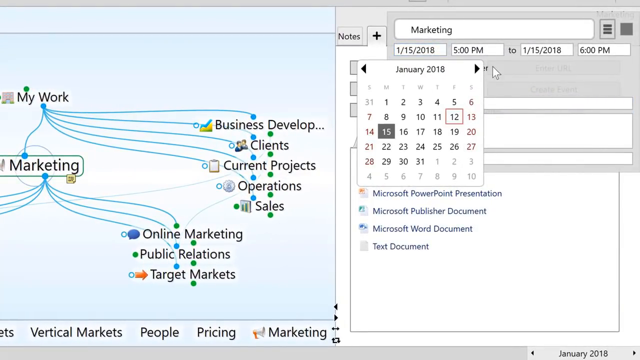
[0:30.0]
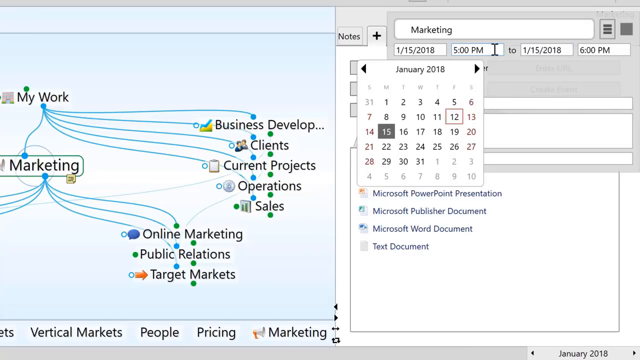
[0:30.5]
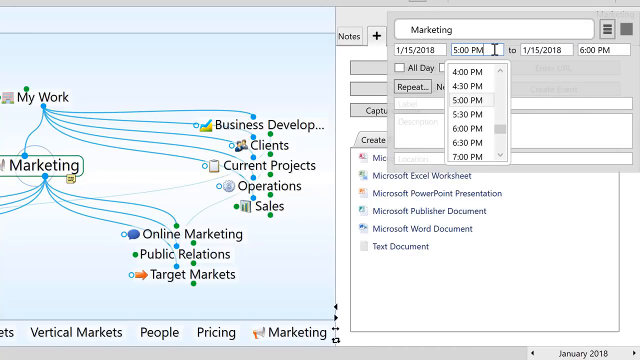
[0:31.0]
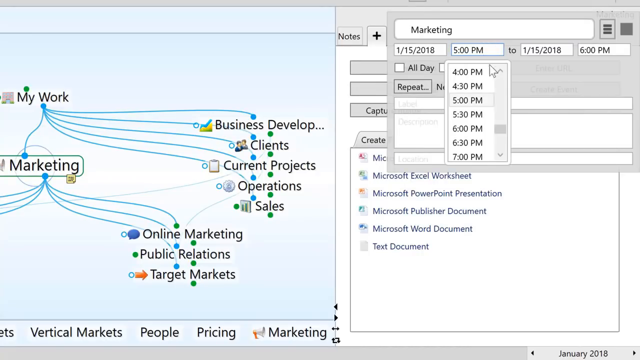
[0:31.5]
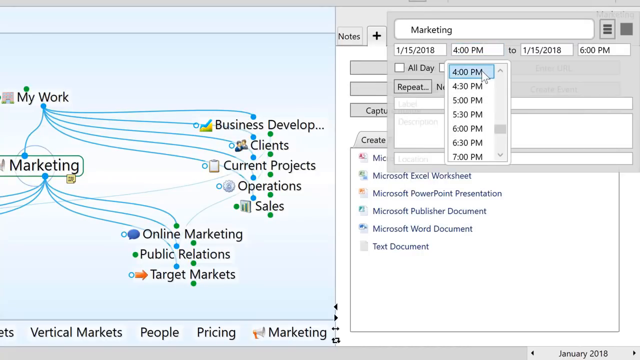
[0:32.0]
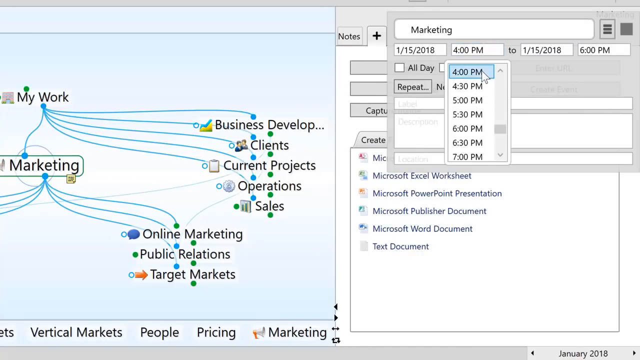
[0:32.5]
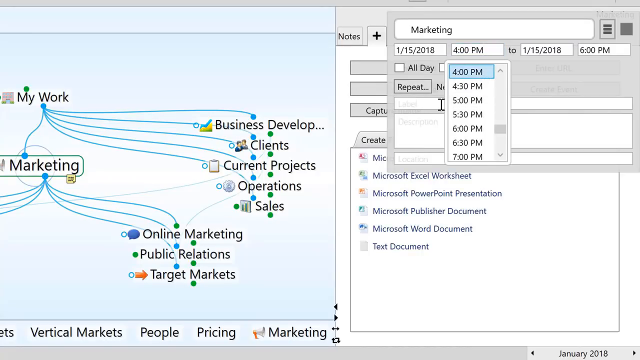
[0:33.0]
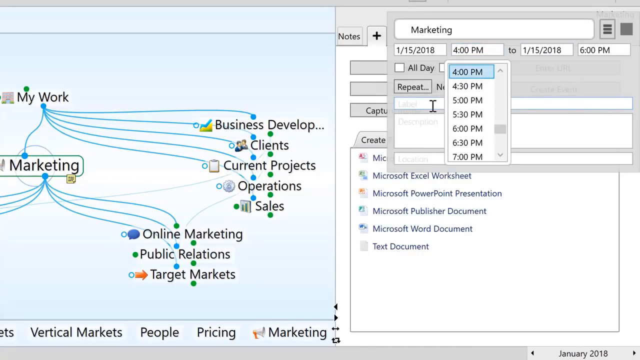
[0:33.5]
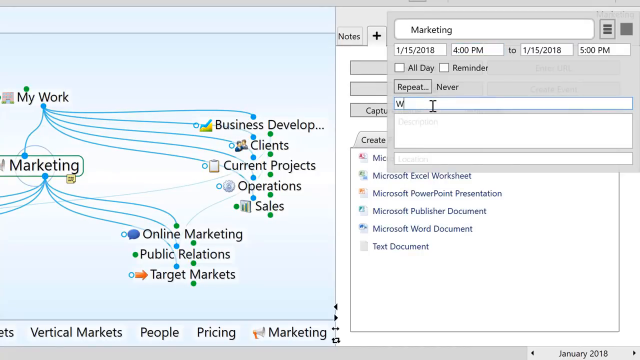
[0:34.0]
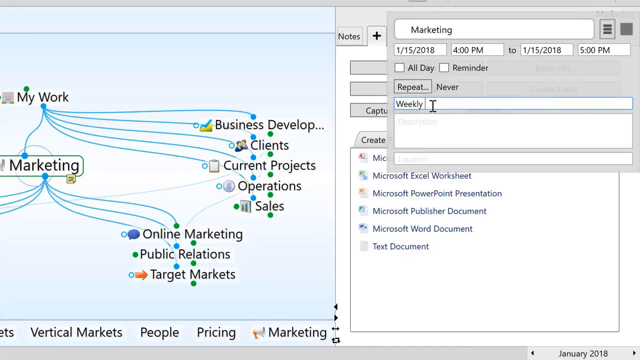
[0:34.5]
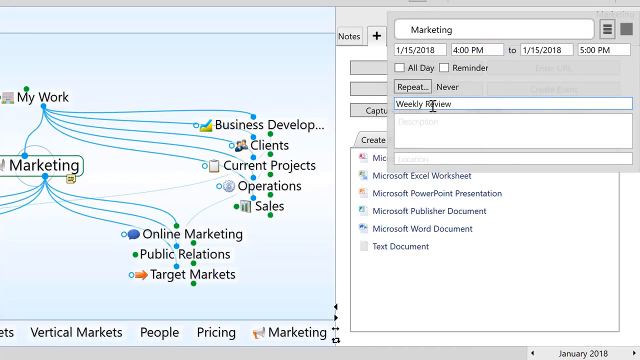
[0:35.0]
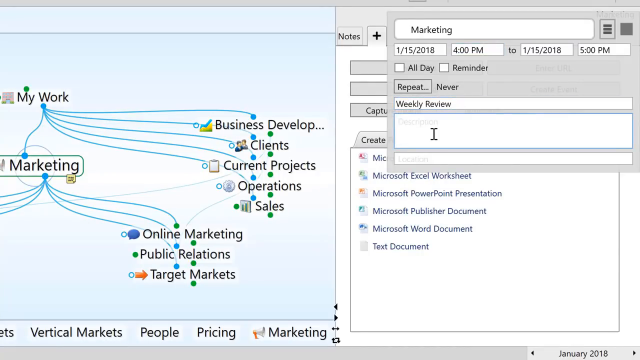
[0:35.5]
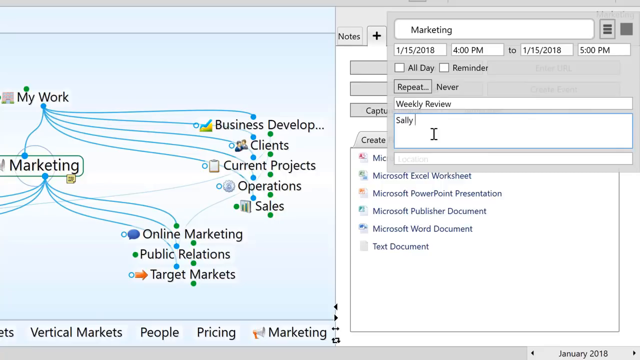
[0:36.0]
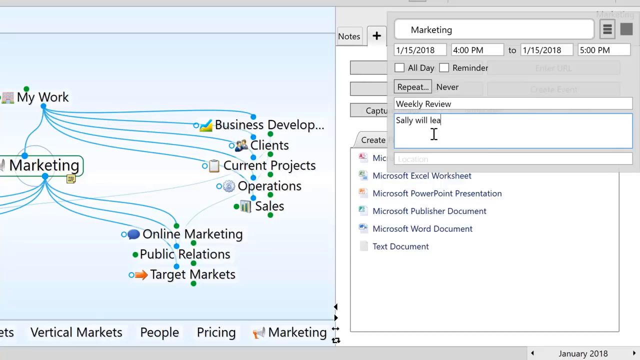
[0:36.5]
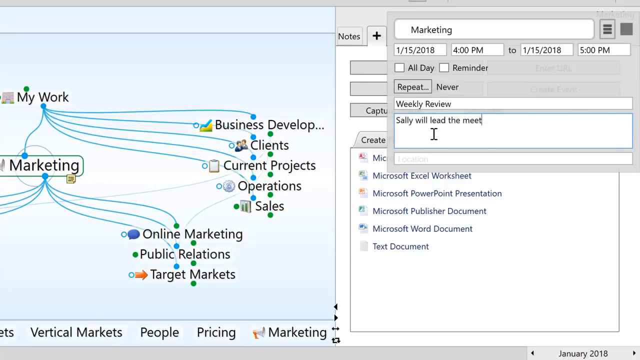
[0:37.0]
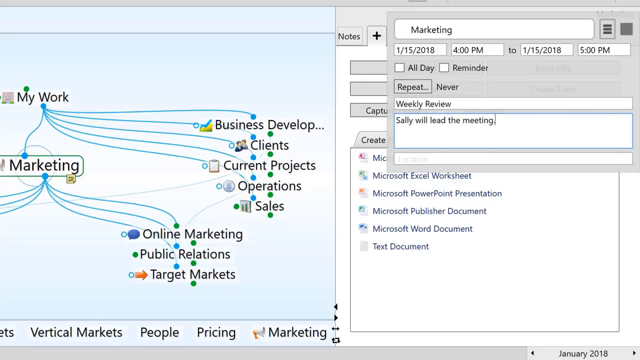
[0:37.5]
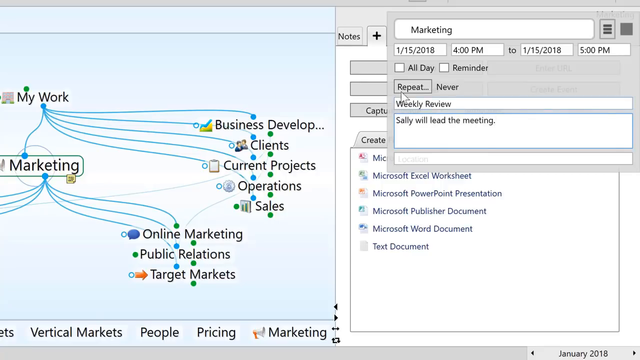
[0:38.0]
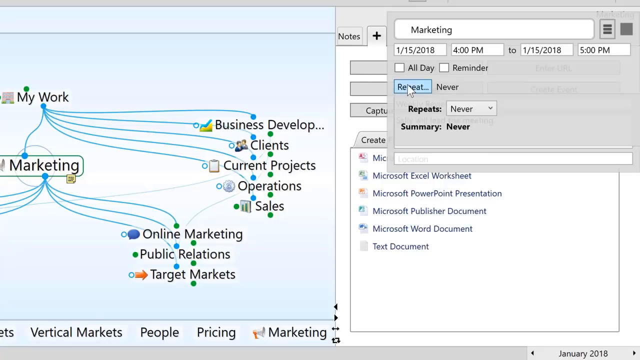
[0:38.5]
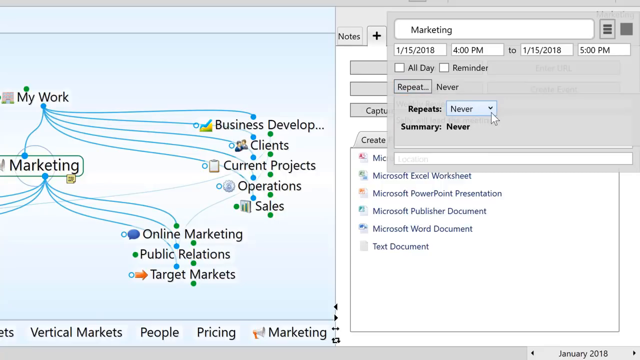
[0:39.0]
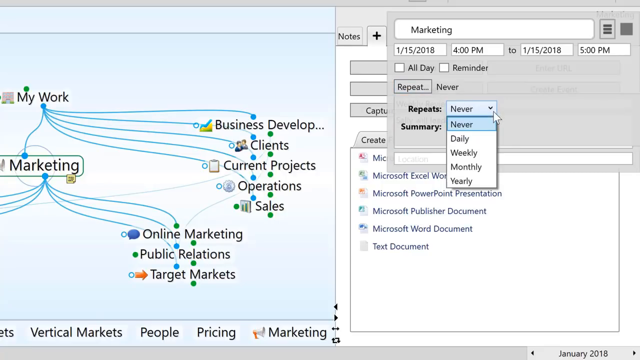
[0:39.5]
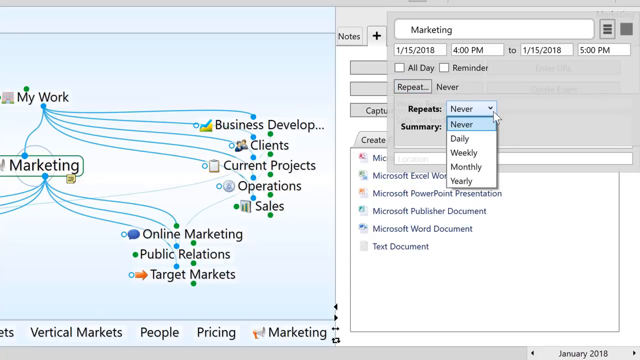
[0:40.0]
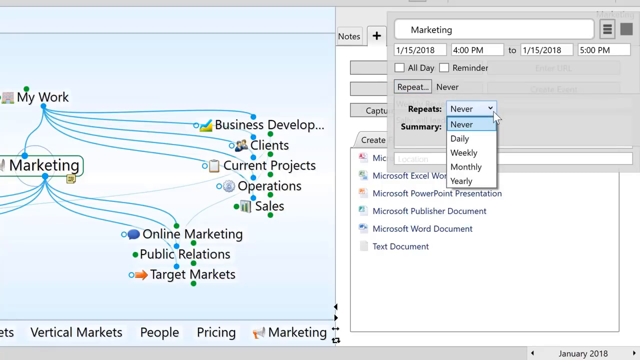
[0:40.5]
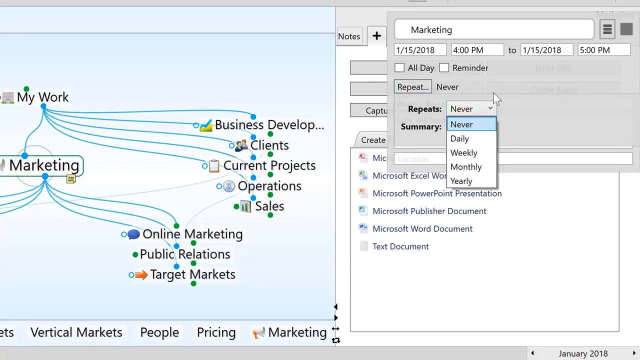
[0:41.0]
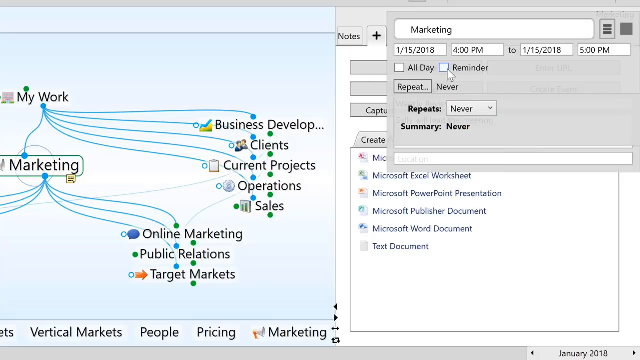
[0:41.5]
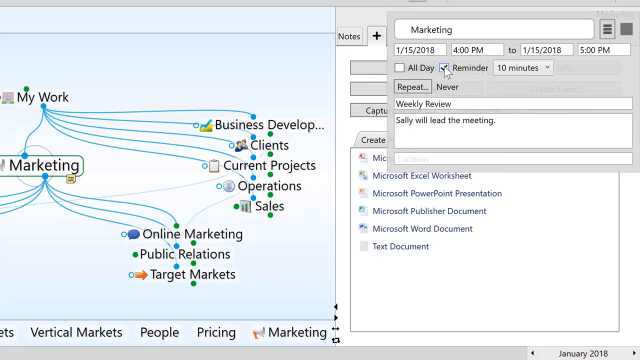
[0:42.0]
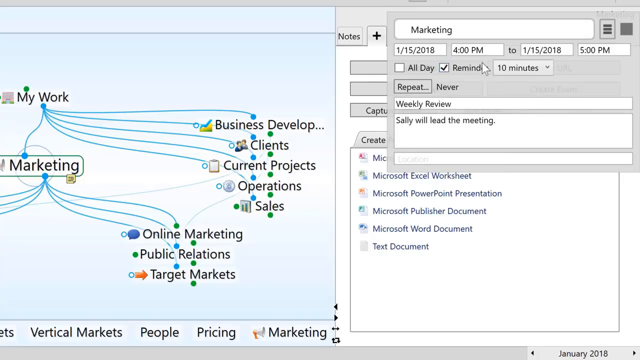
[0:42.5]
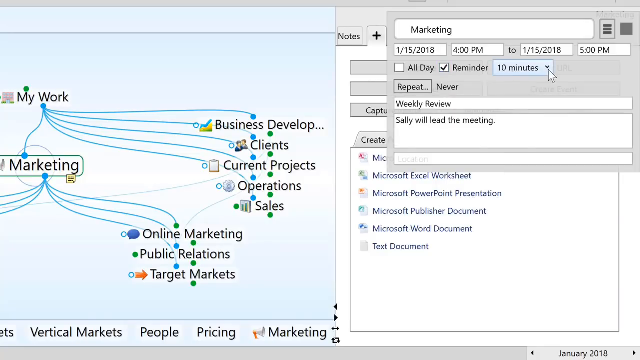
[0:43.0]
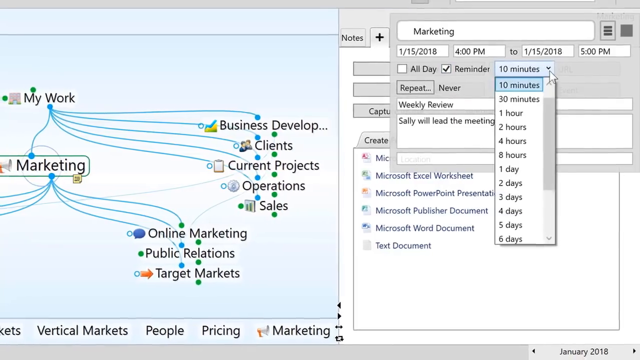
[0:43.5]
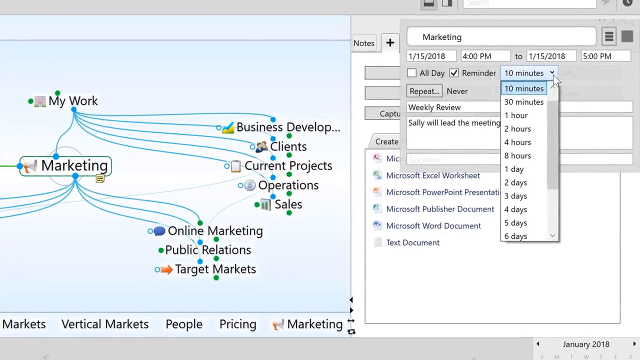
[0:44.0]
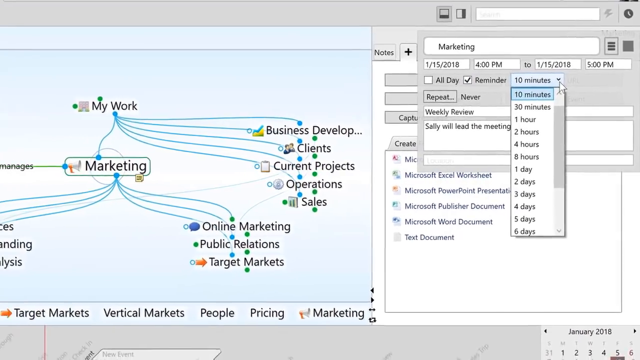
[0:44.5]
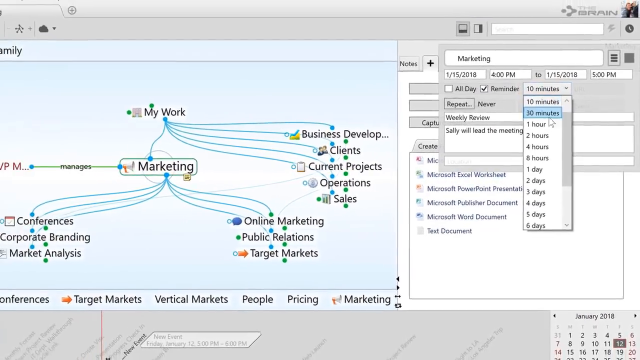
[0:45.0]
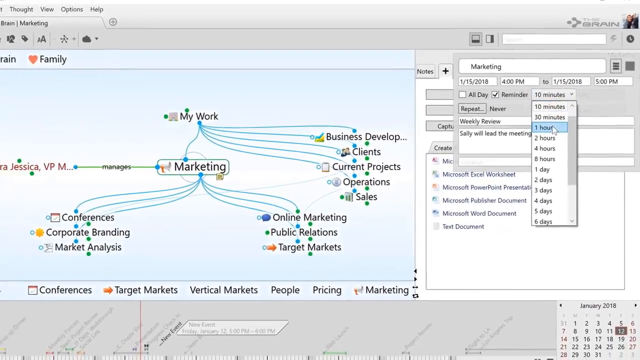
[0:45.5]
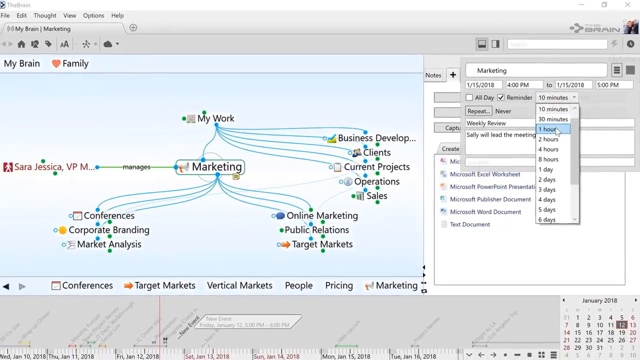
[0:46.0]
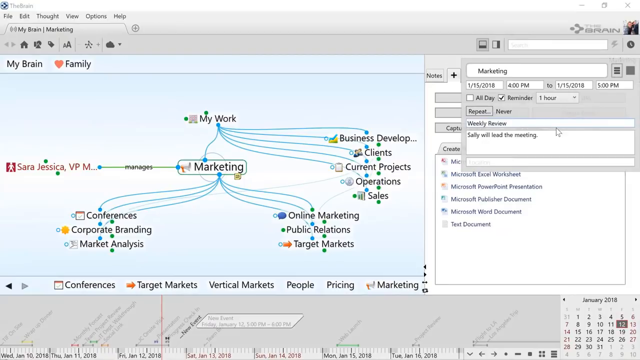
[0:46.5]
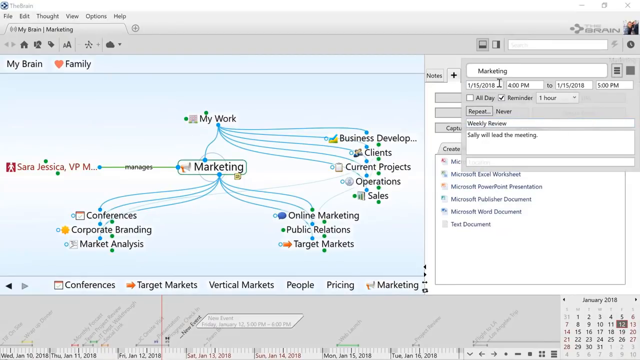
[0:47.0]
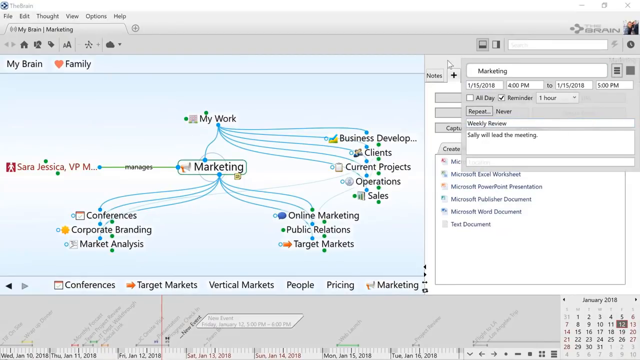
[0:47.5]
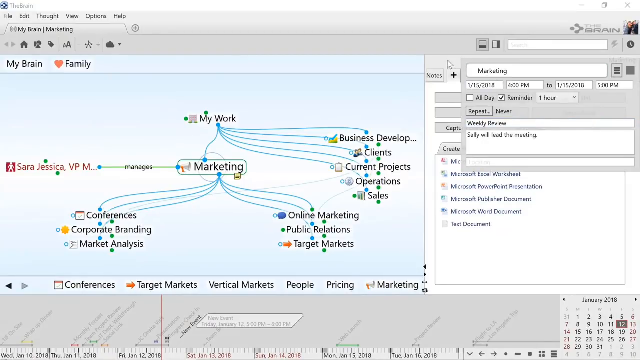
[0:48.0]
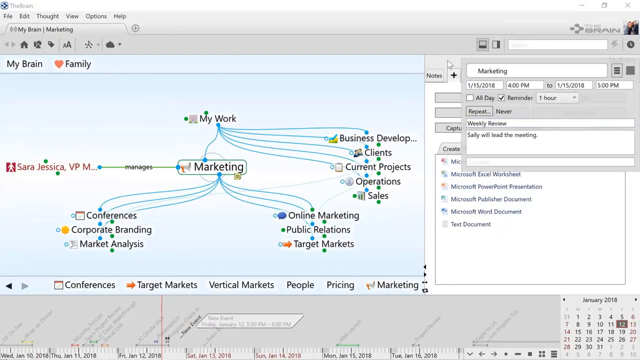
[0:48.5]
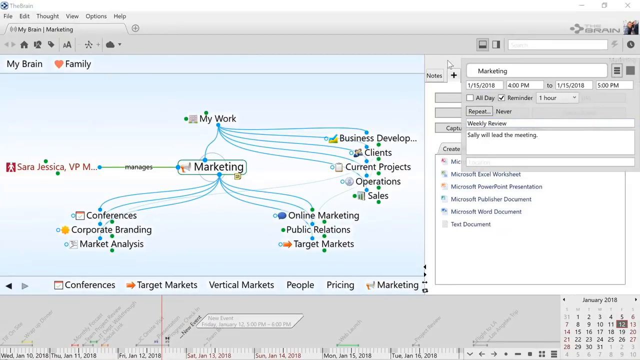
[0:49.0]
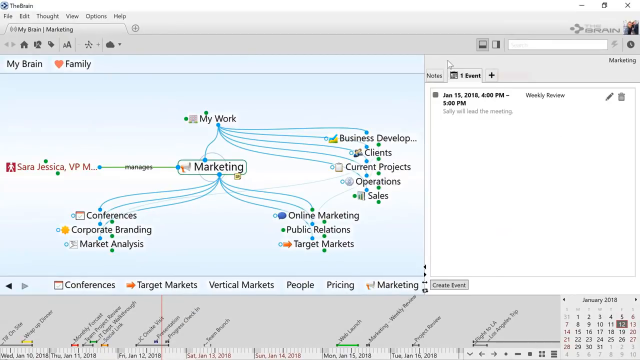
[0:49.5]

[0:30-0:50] A marketing document is being created with a date of 1-15-2018 at 5pm to 1-15-2018 at 6pm, and the time is changed to 4pm. A calendar item for marketing is set up with a date and a reminder of one hour, and it appears on the timeline. This is the creation of a calendar event; notes are added reading "Sally will lead the meeting," and the event is set to never repeat. The screen then pulls out and the event shows up on the calendar.